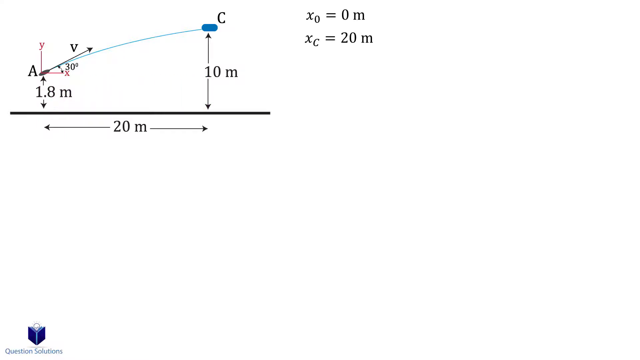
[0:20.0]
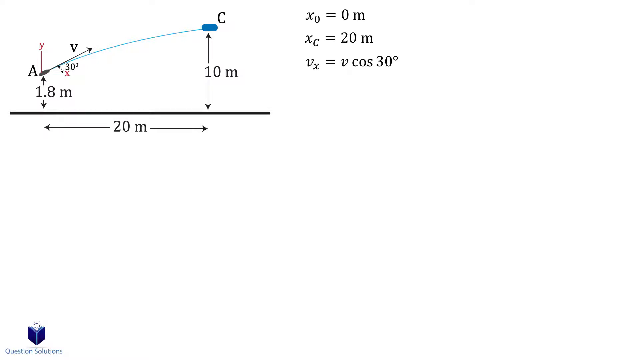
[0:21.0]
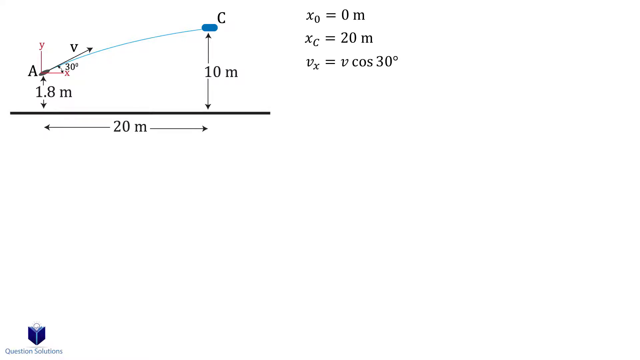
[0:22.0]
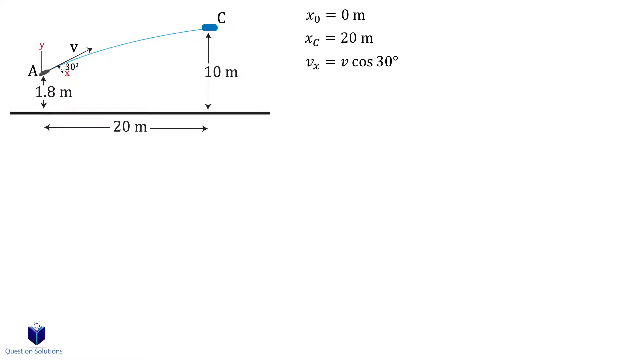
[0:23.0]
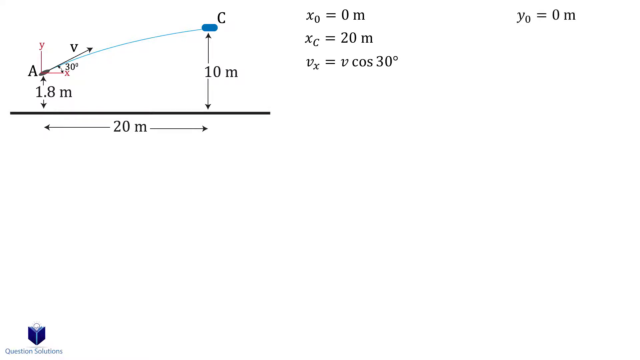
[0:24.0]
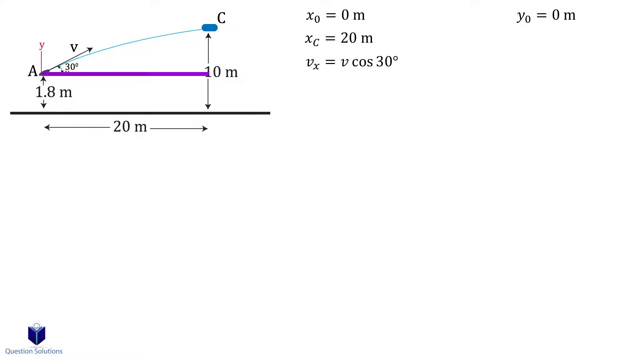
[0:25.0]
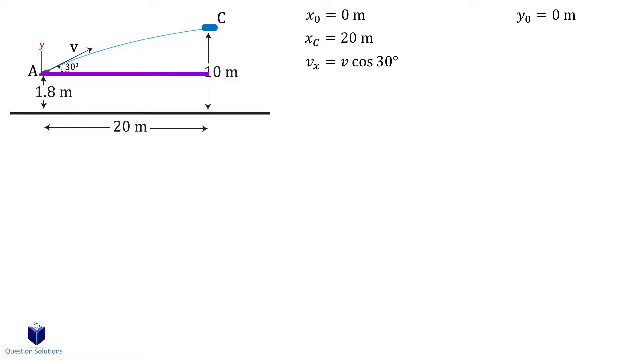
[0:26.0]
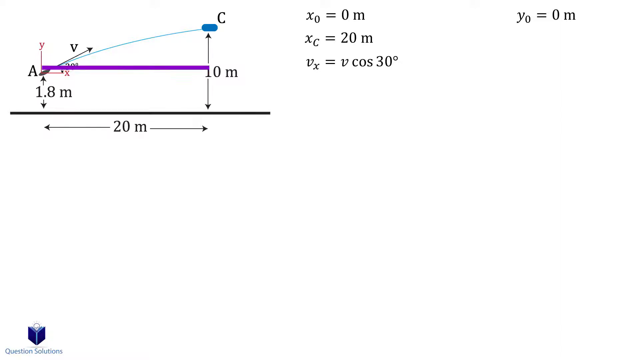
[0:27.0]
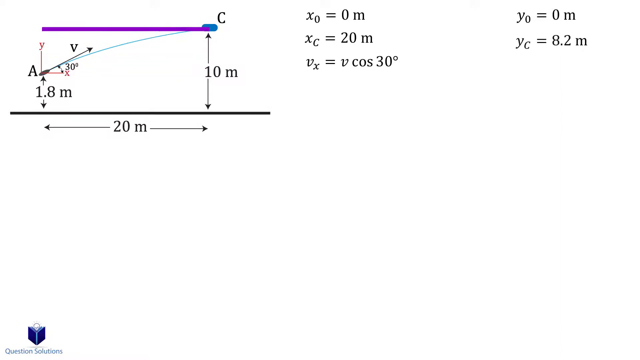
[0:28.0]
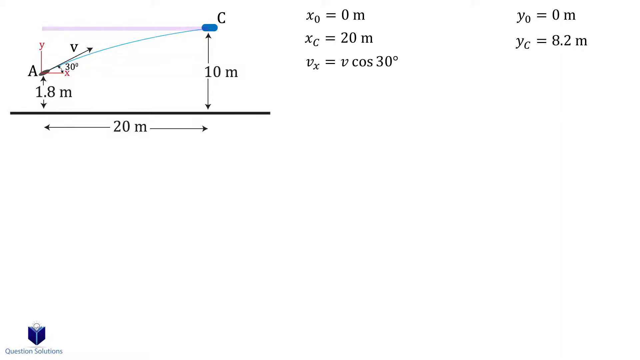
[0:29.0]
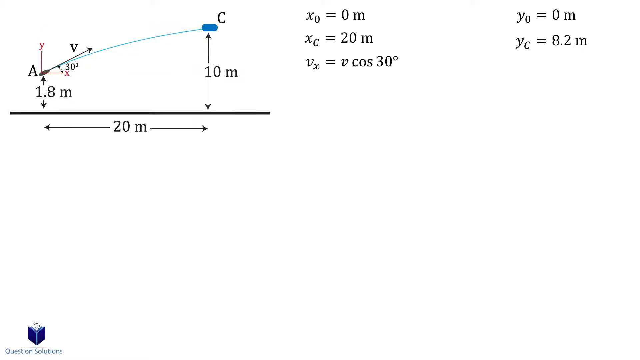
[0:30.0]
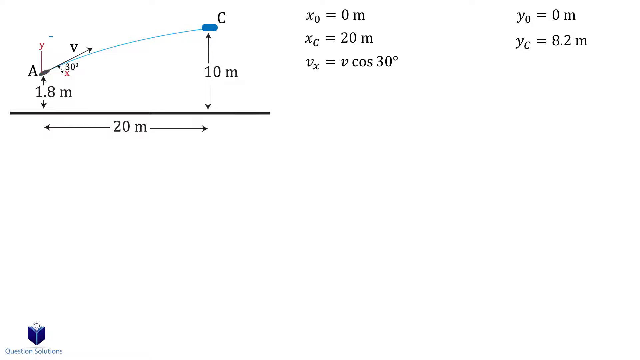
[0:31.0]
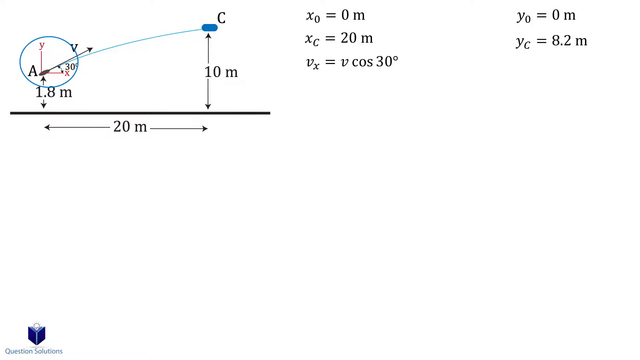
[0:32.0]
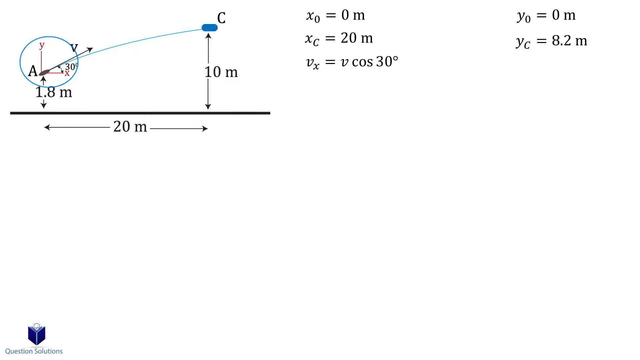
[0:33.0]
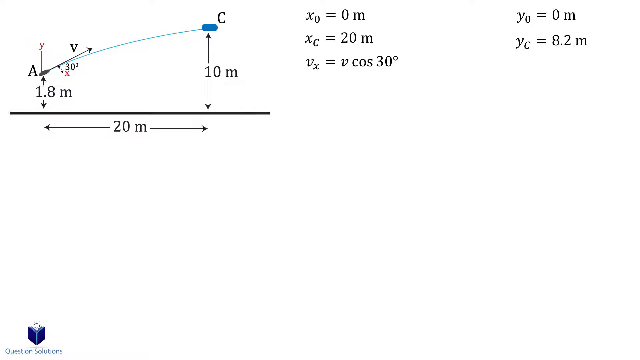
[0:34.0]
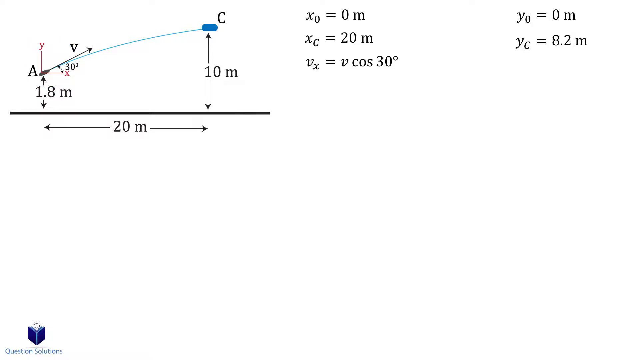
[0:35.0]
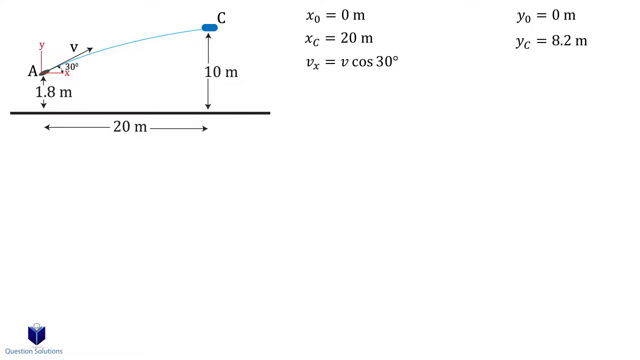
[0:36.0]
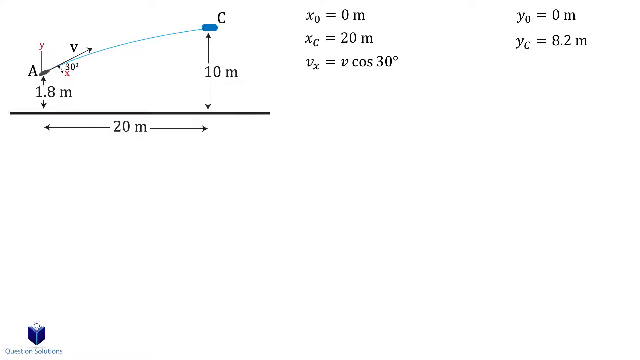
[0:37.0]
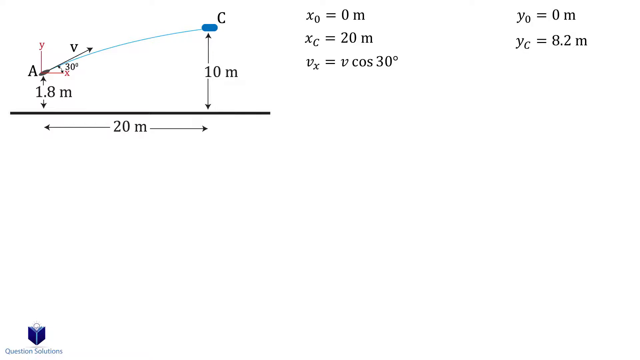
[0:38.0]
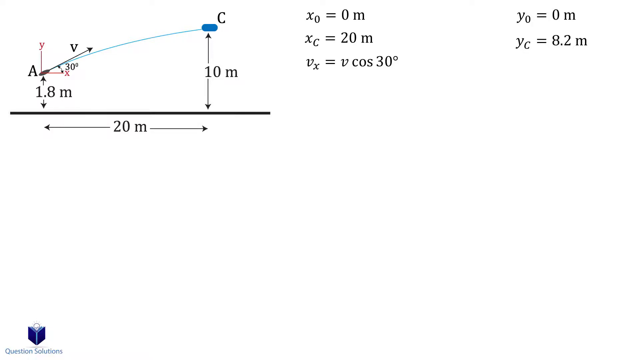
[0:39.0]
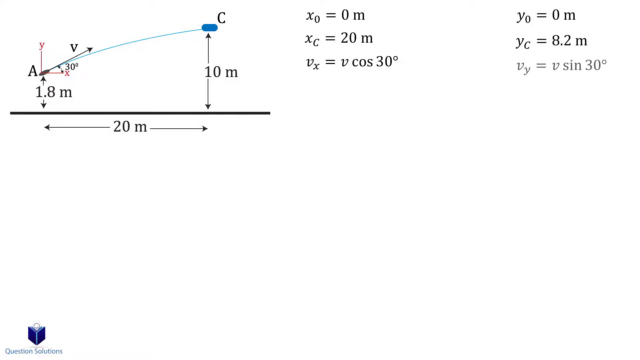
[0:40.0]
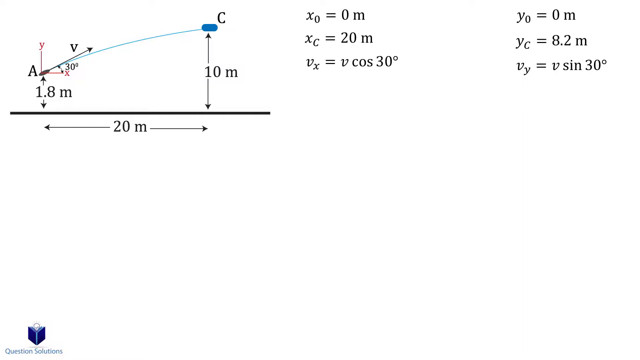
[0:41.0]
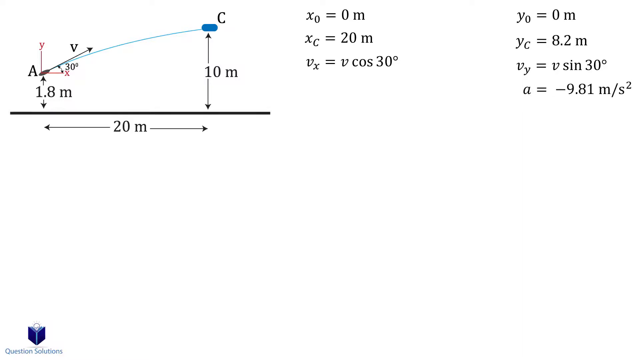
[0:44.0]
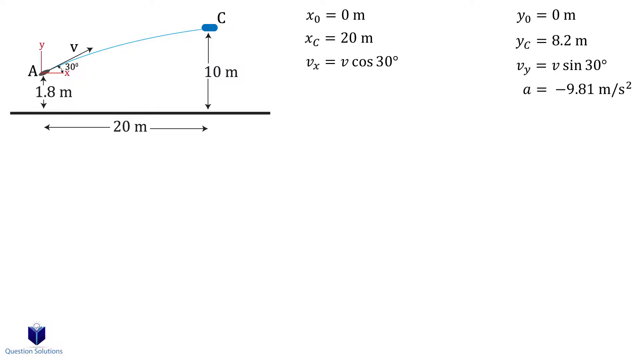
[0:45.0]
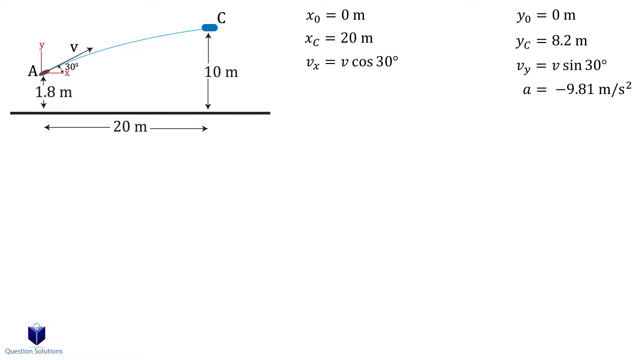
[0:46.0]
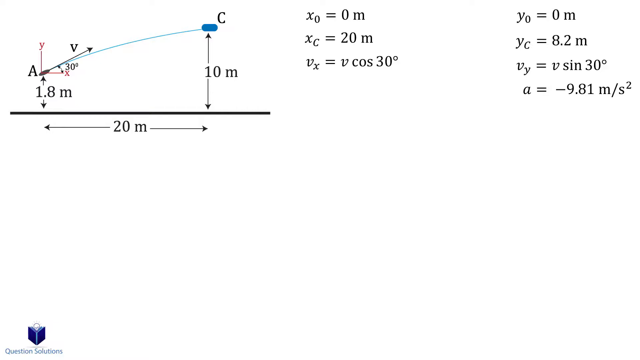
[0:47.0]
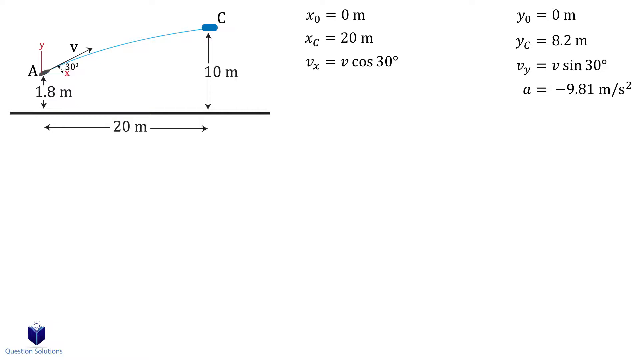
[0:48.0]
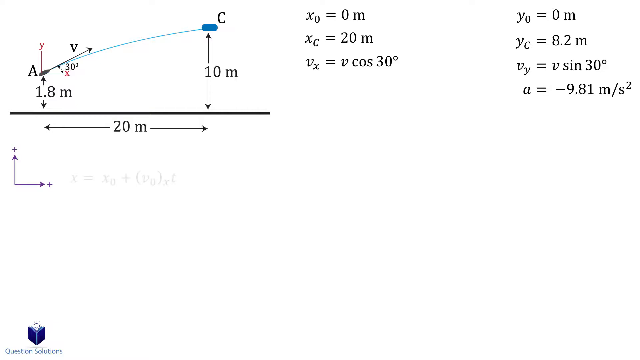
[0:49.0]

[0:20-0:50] On the white screen, the graph in the top left corner has numerous numbers and letters on it in a small font. A black line runs along the bottom of the graph, with two arrows, one pointing left and one pointing right, and between them the label "20M." A curved blue line is at the top of the graph, and a vertical red line is on the far left side of the graph. On the right side are two equations: "X0 equals 0M" and, beneath it, "XC equals 20M." Soon a new equation appears reading "VX equals VCOS 30 degrees," and then in the far right corner another equation appears reading "Y0 equals 20M." On the left side of the screen, a horizontal purple line appears in the middle of the graph, then moves vertically from the middle of the graph up to the very top of the screen while keeping its x position.